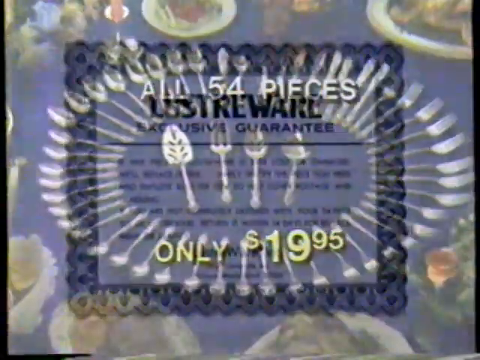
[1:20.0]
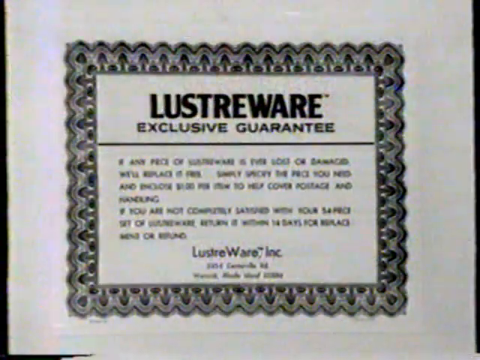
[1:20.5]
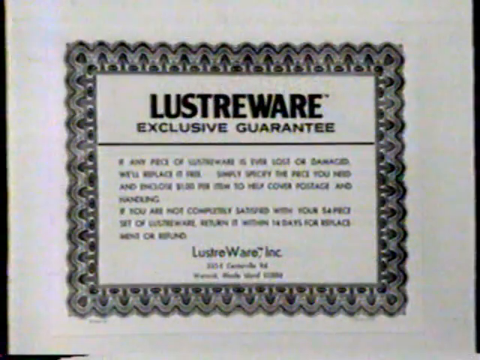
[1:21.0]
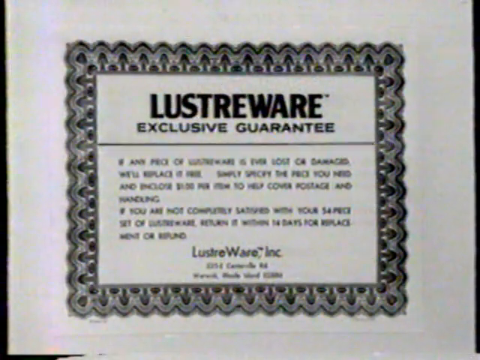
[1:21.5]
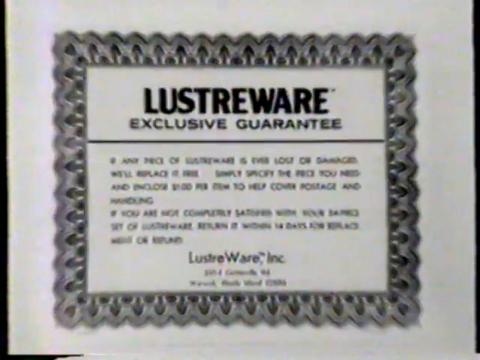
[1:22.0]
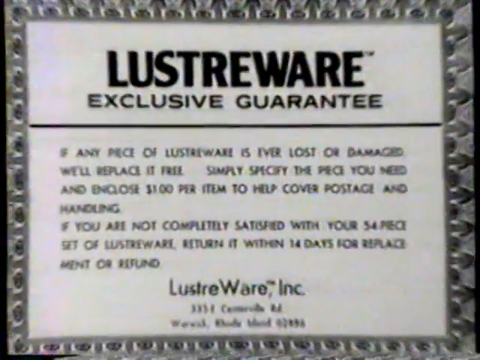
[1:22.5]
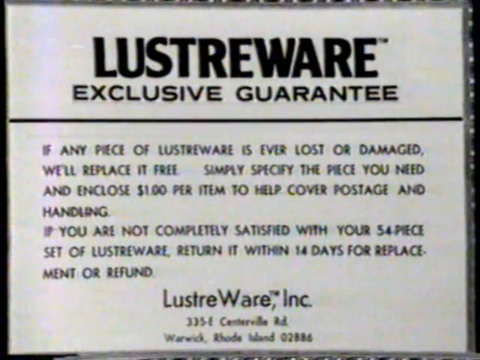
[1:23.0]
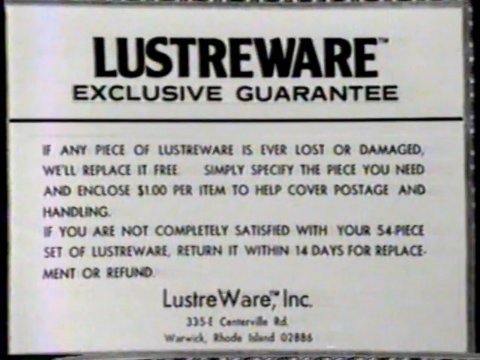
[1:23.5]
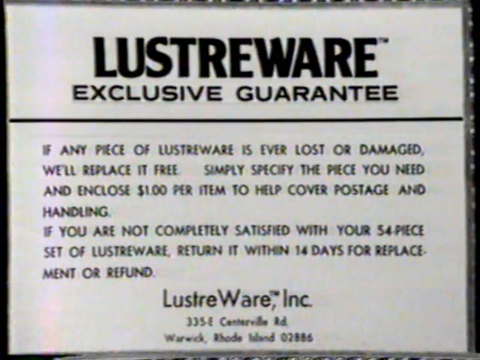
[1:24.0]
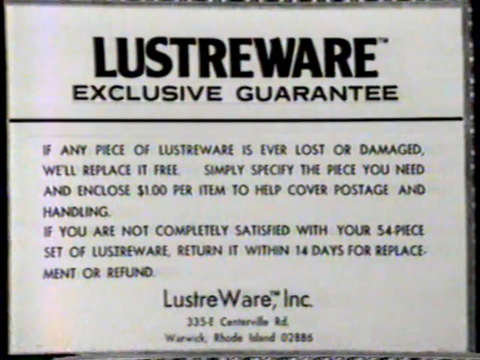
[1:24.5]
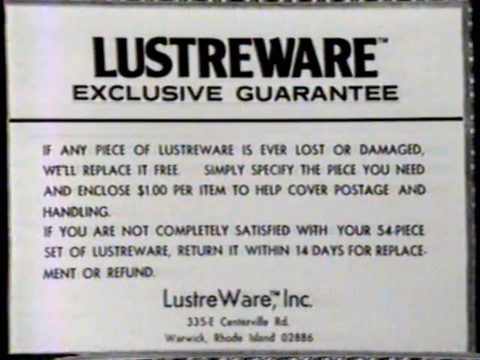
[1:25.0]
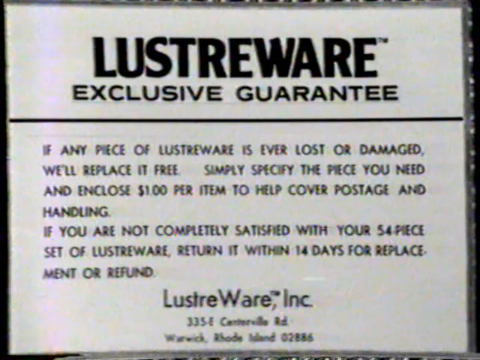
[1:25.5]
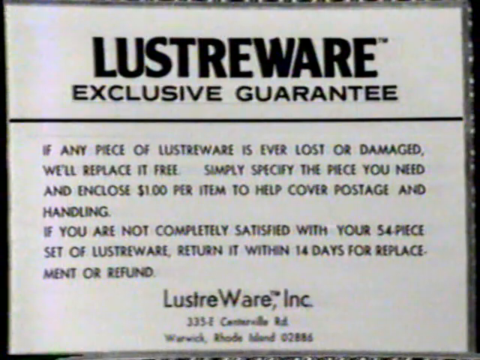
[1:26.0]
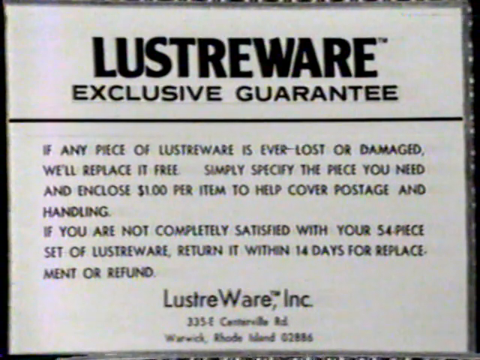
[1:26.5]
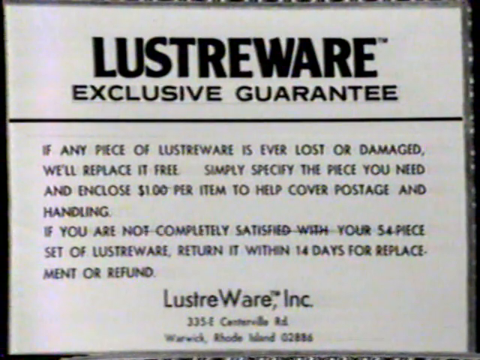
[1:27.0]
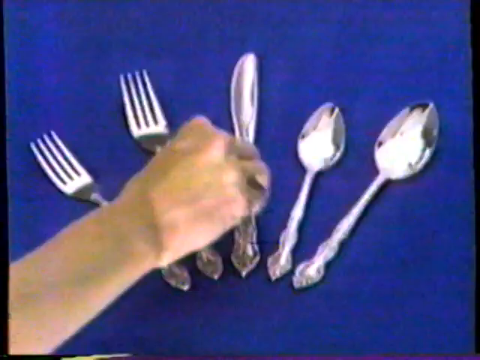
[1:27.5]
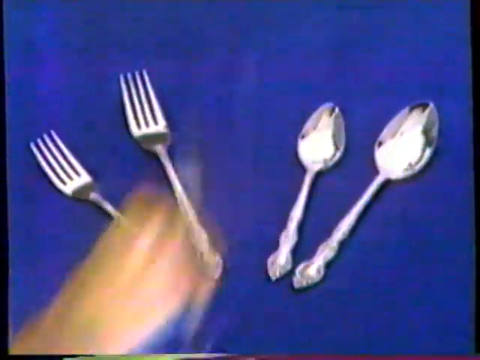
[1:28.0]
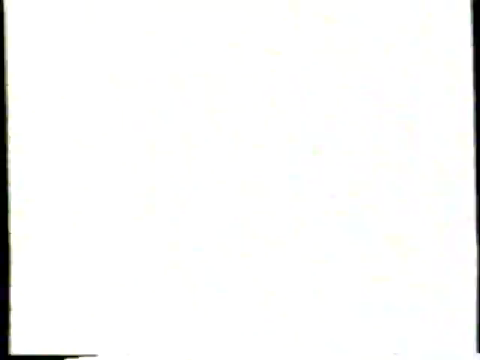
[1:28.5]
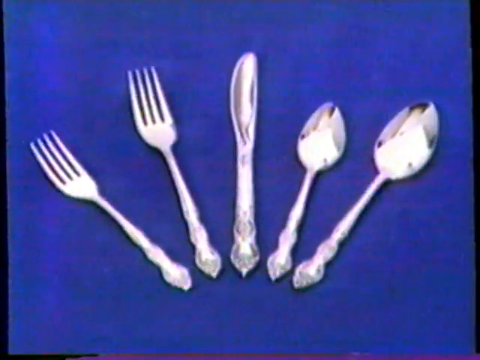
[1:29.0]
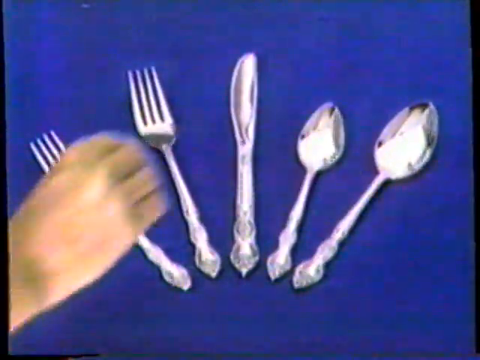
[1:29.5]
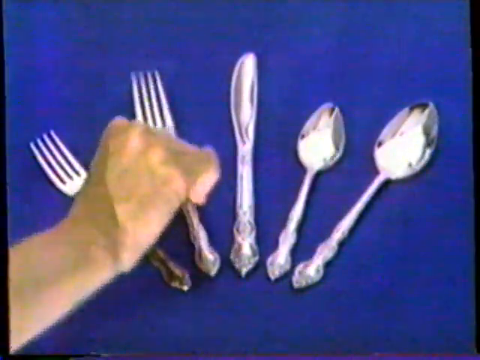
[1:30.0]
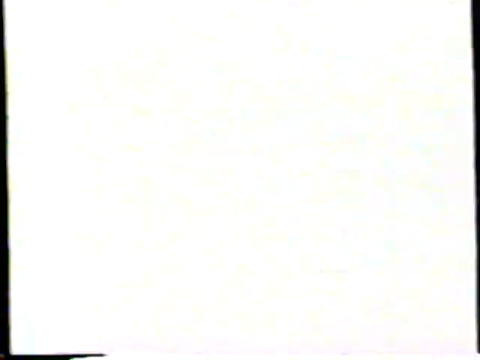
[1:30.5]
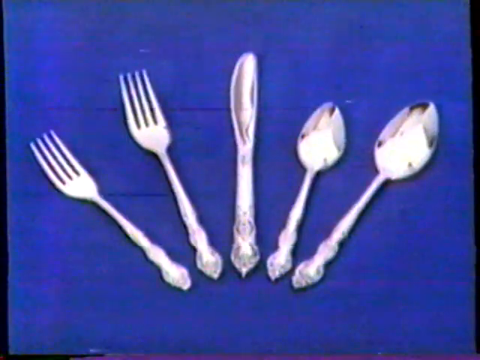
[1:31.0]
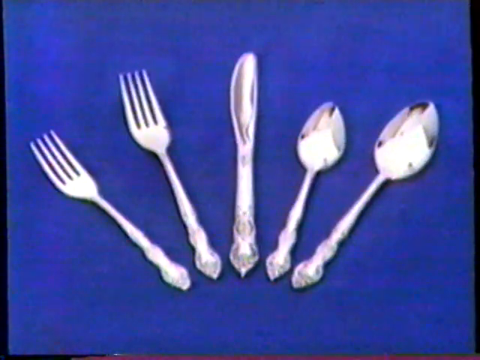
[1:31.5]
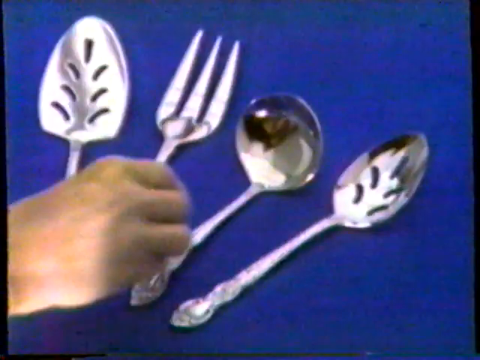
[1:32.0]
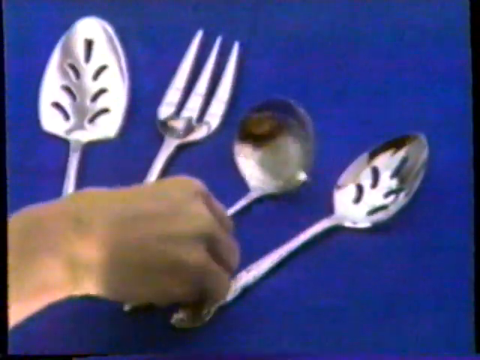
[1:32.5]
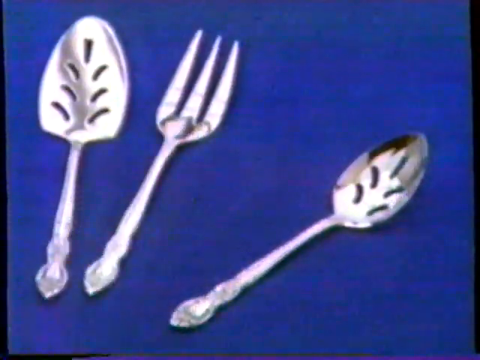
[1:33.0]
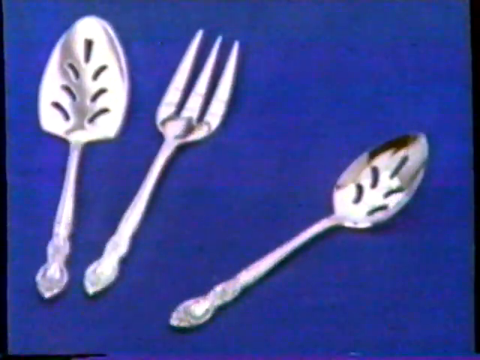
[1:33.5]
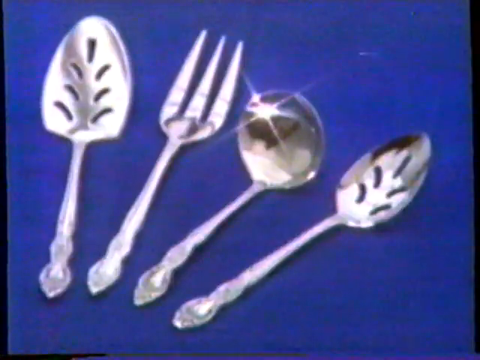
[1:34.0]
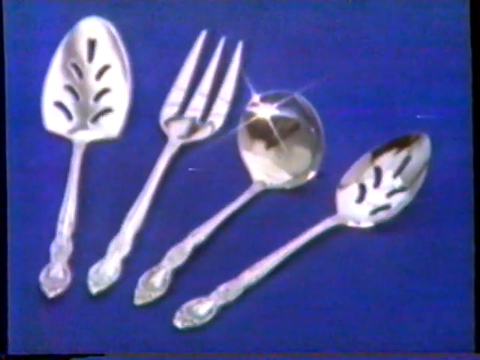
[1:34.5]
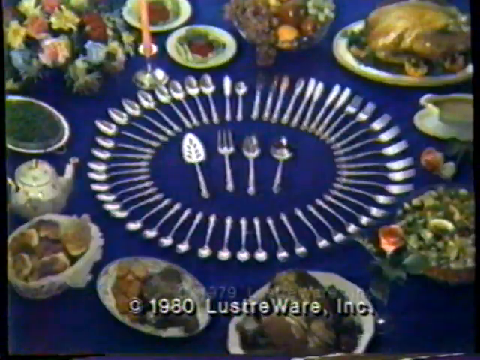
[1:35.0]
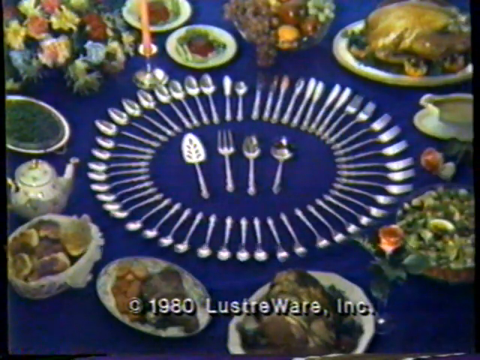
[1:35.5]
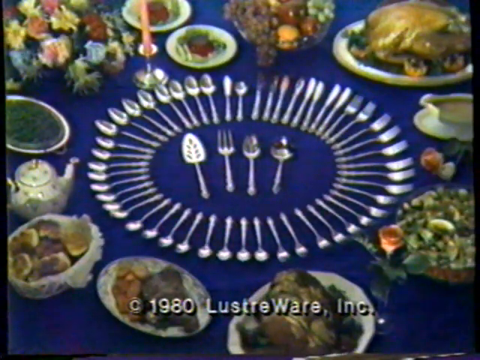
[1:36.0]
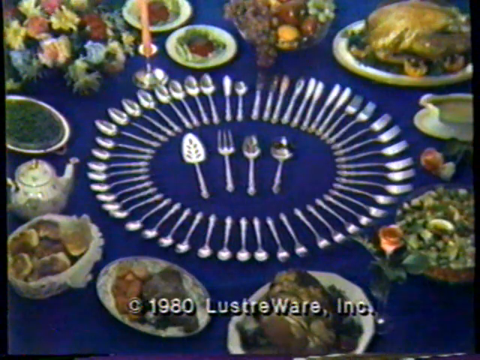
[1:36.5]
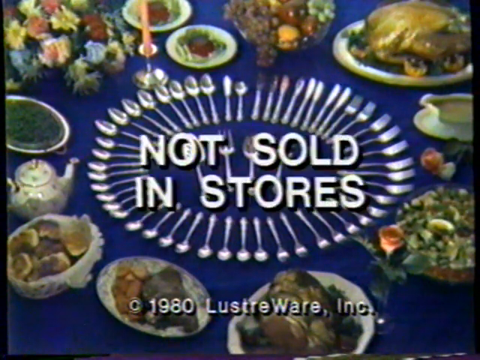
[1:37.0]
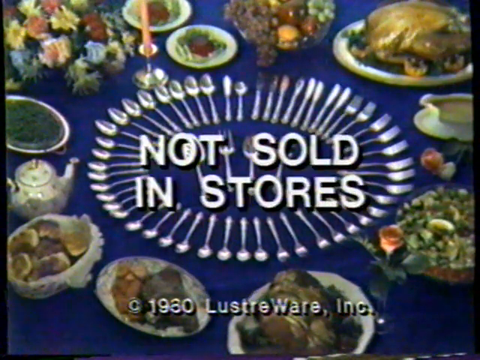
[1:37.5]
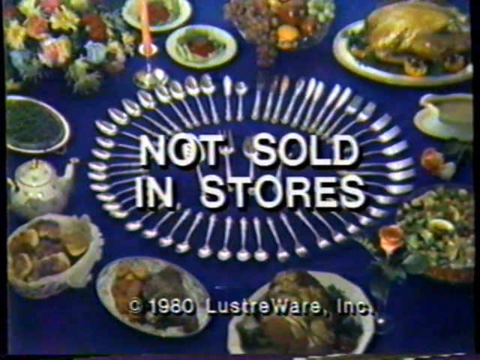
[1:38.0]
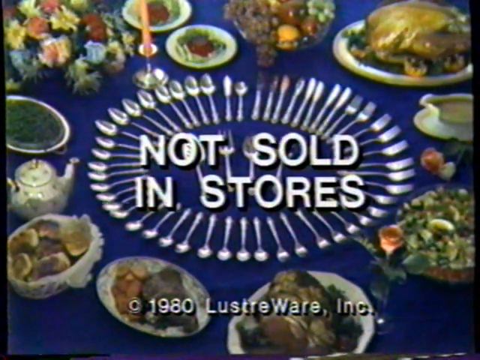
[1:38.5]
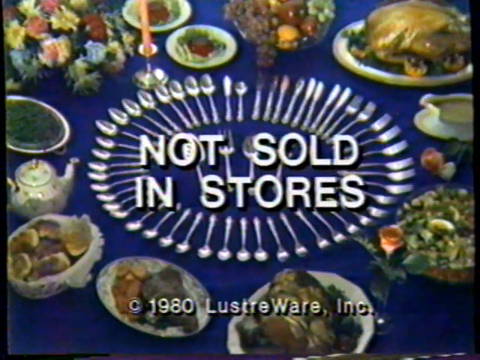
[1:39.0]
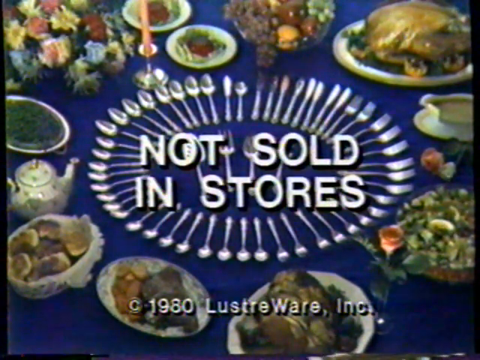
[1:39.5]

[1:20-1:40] The stainless steel cutlery set, arranged in a circle with all 50 or so pieces, fades off screen as a white background appears with a stamp-like filigree. Text inside it identifies the set as Lusterware with an "exclusive guarantee": if any piece of Lusterware is ever lost or damaged, the company will replace it free when the needed piece is specified and $1 per item is enclosed to help cover postage and handling, and if the buyer is not completely satisfied with the 54-piece set of Lusterware, it can be returned within 14 days for replacement or refund. The company name and address follow. The text stays on screen for several moments. Then a man takes a knife away from a set of four pieces of cutlery and the knife magically reappears; a man takes a fork from the left of the same set and it magically reappears; and a man takes a ladle from the same cutlery in a different formation and the ladle reappears. The entire cutlery set is then shown in the middle in the same circular formation, surrounded by different plates of food, with the text "not sold in stores" in white in front of it.